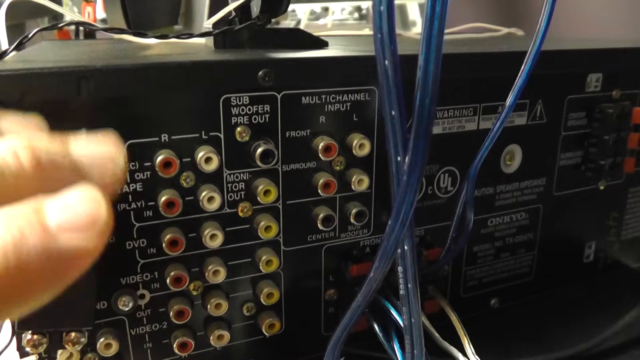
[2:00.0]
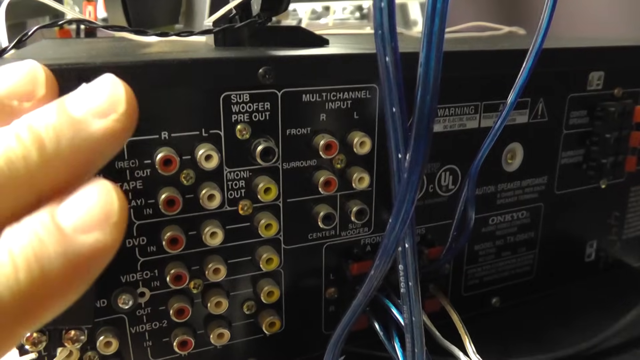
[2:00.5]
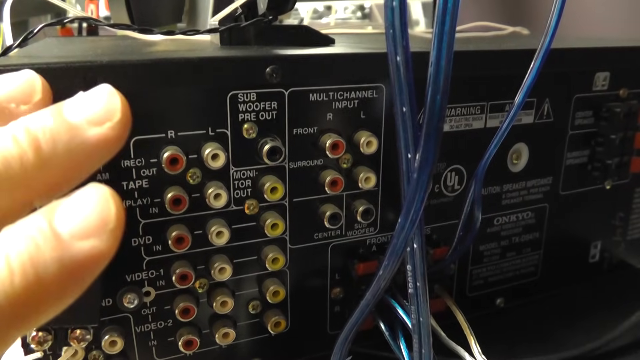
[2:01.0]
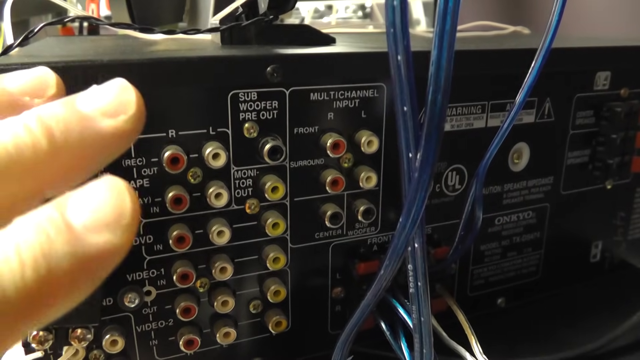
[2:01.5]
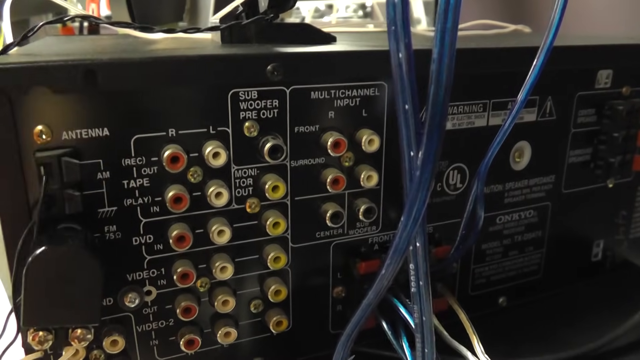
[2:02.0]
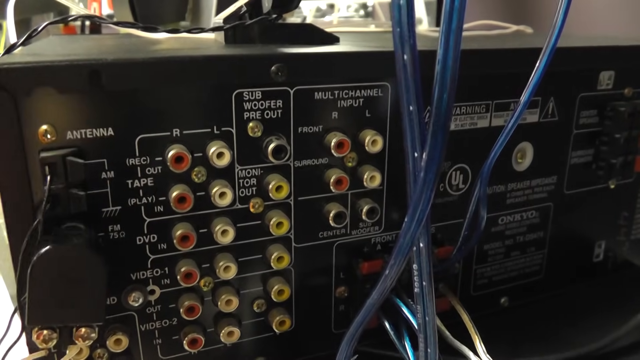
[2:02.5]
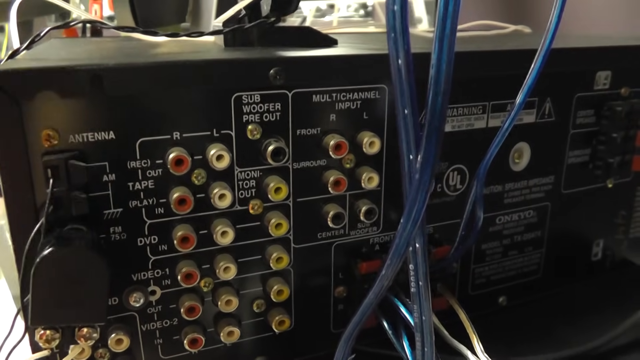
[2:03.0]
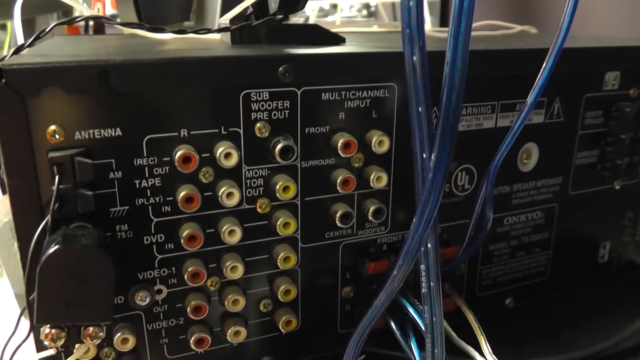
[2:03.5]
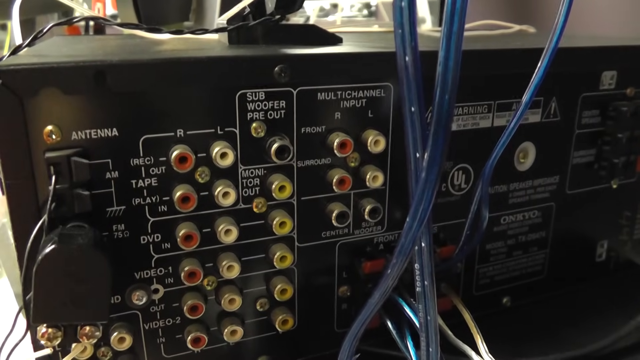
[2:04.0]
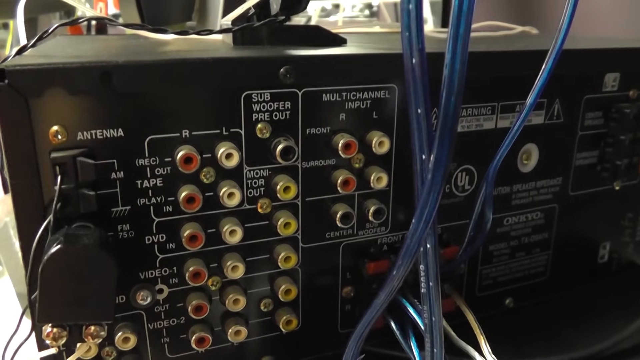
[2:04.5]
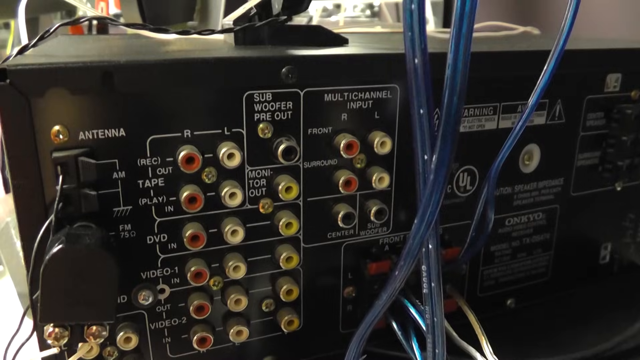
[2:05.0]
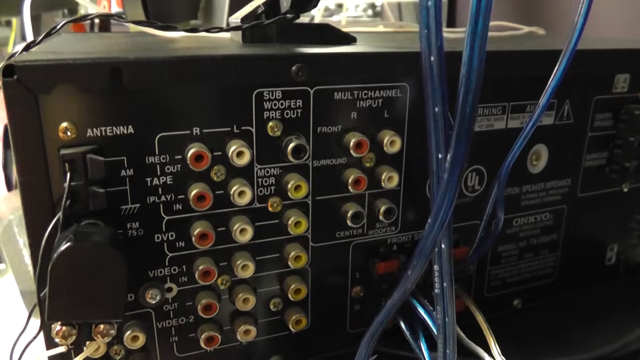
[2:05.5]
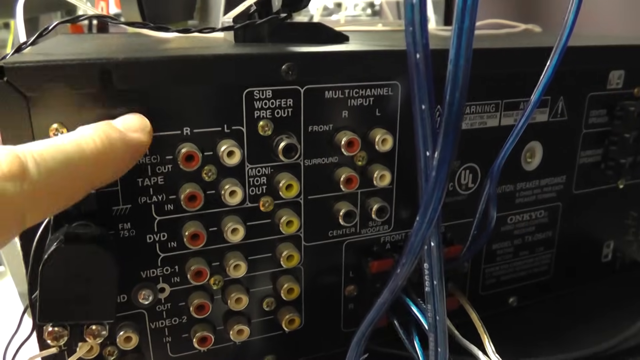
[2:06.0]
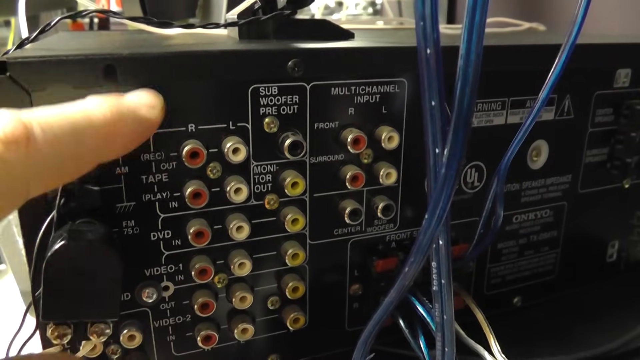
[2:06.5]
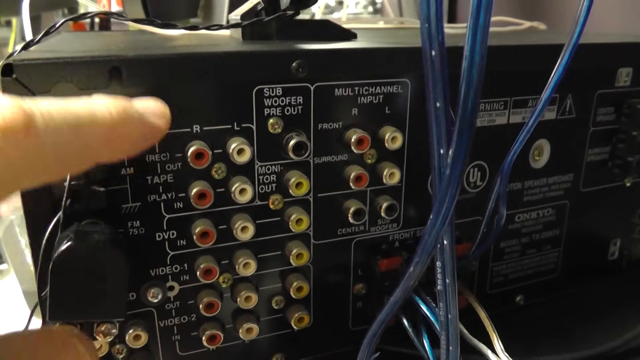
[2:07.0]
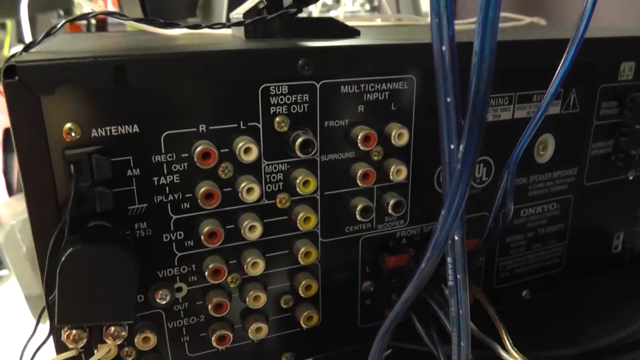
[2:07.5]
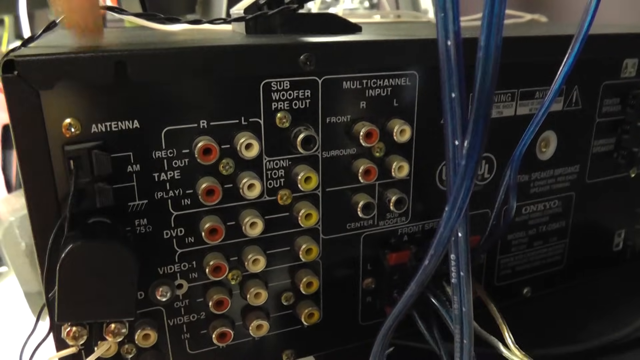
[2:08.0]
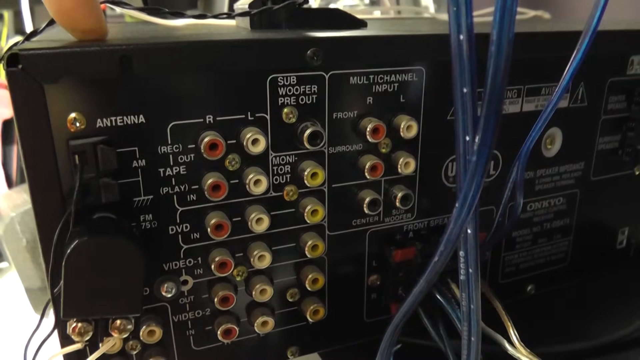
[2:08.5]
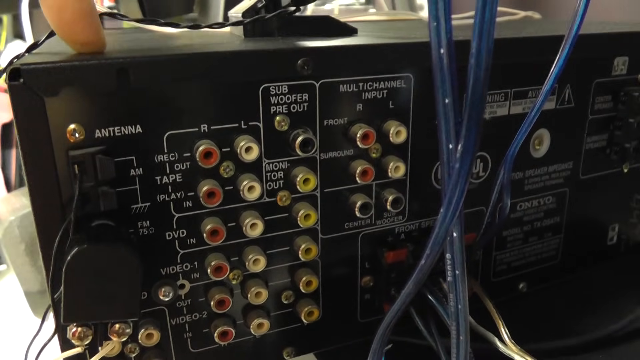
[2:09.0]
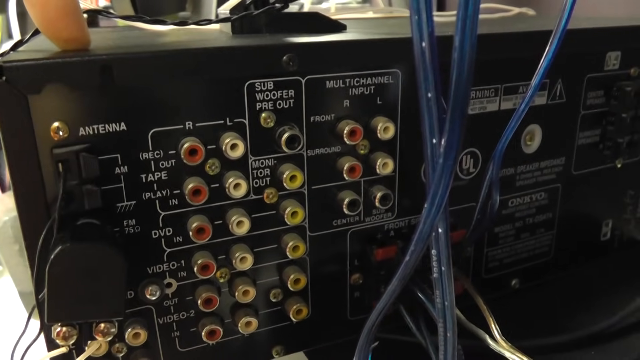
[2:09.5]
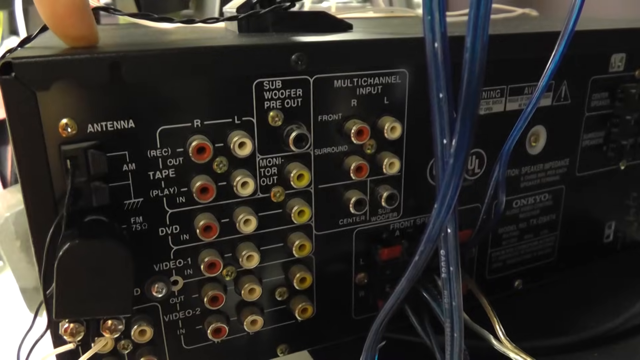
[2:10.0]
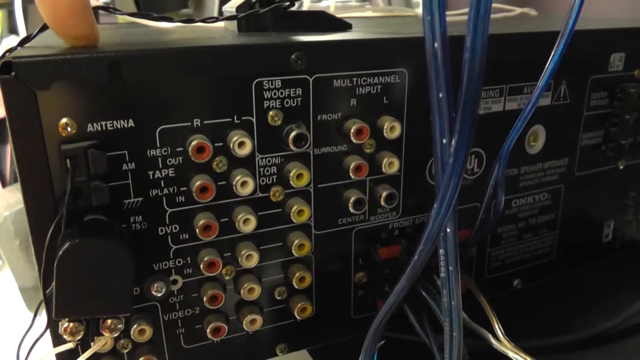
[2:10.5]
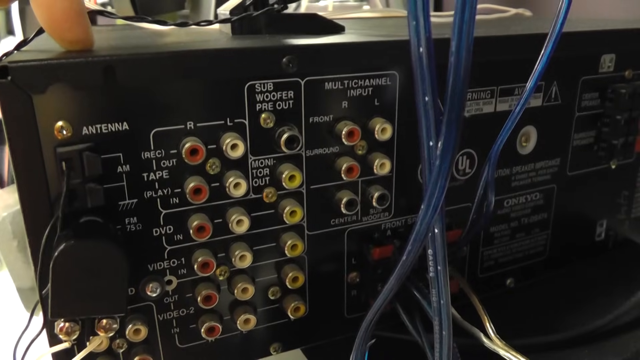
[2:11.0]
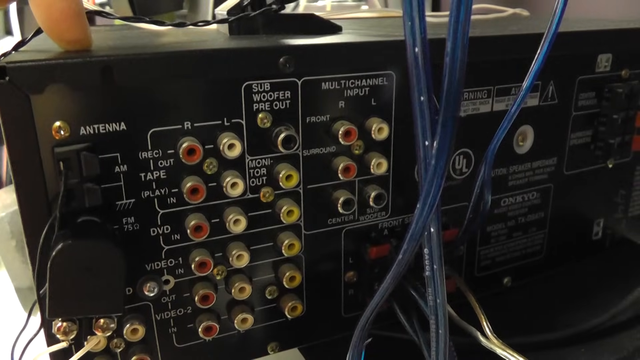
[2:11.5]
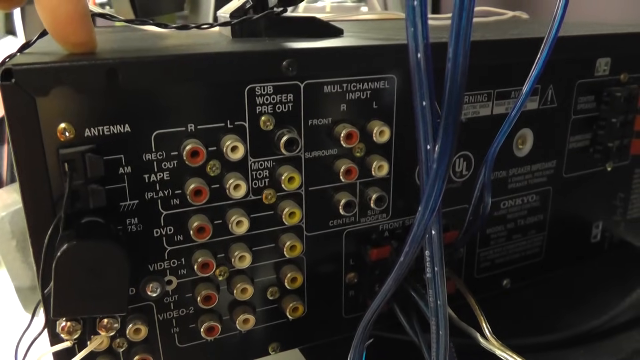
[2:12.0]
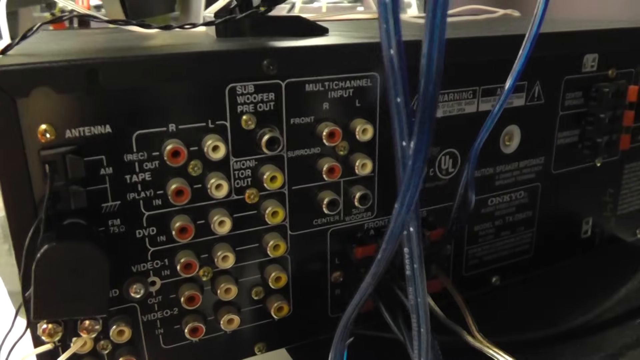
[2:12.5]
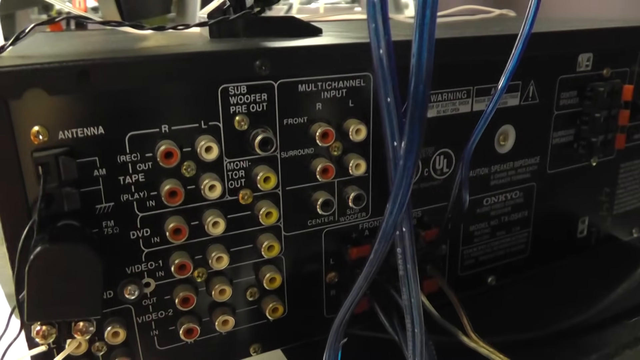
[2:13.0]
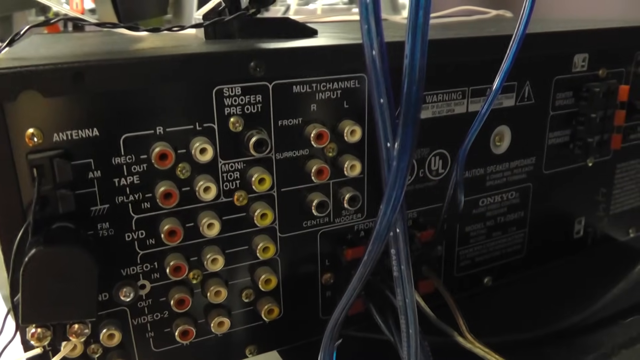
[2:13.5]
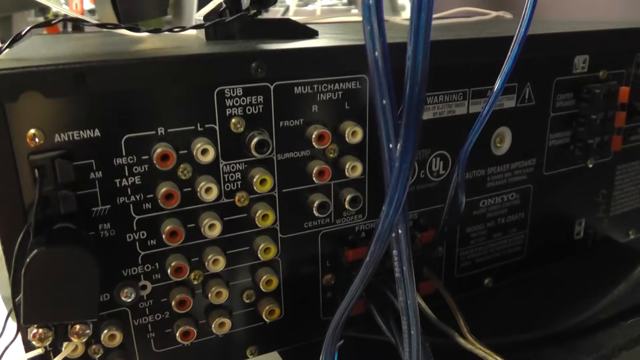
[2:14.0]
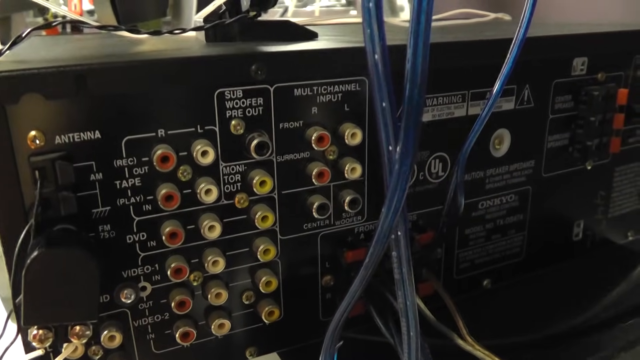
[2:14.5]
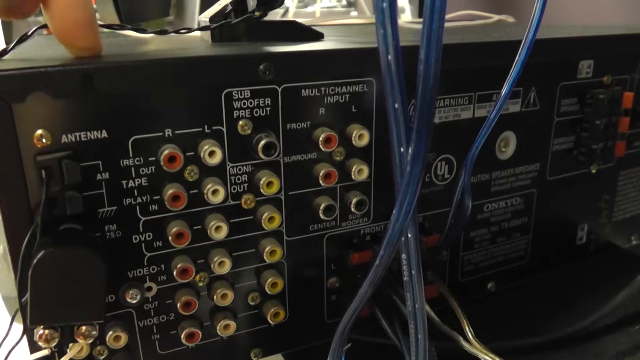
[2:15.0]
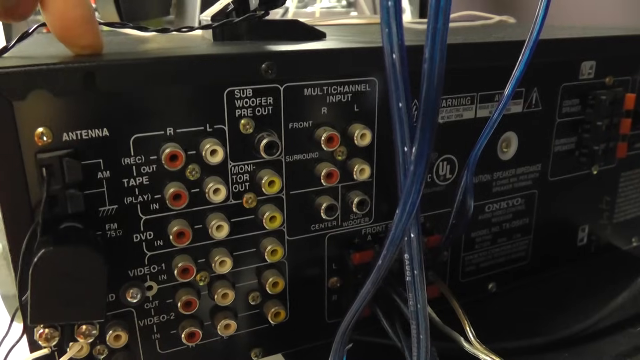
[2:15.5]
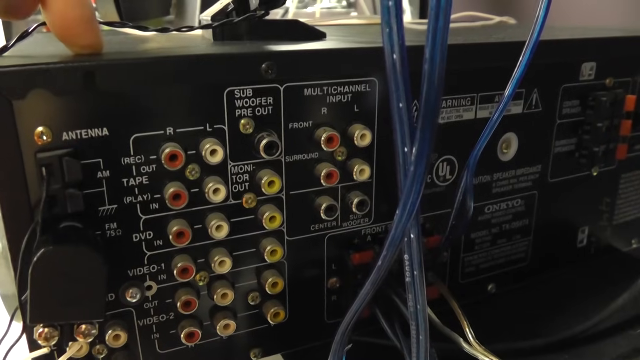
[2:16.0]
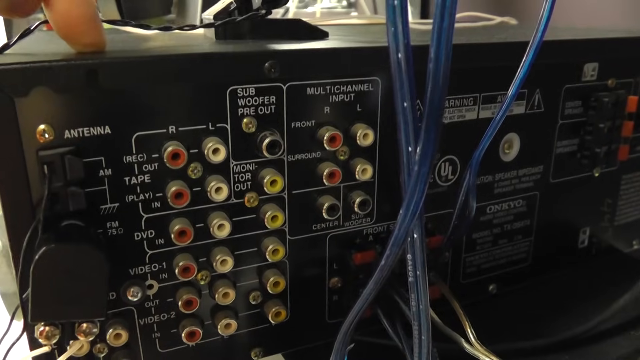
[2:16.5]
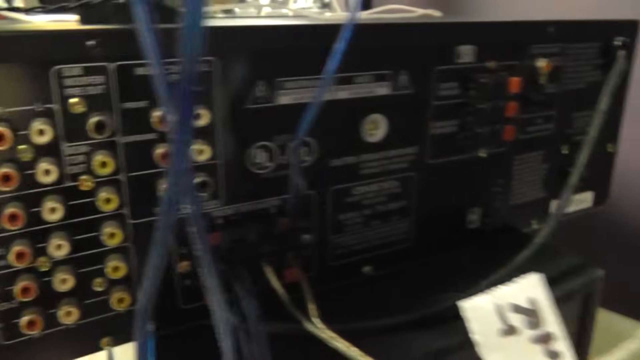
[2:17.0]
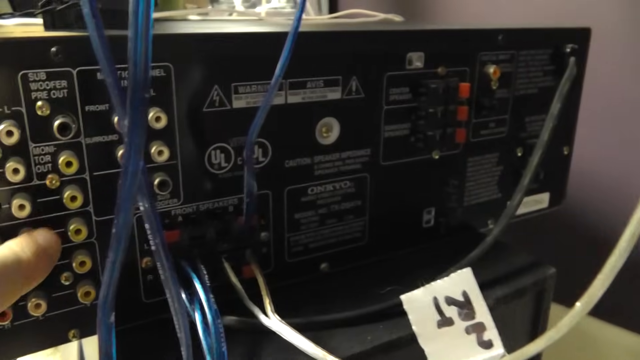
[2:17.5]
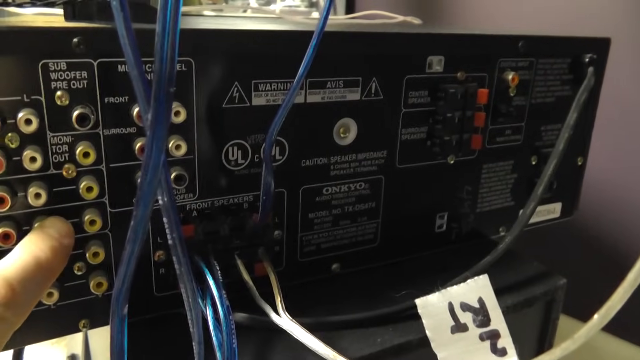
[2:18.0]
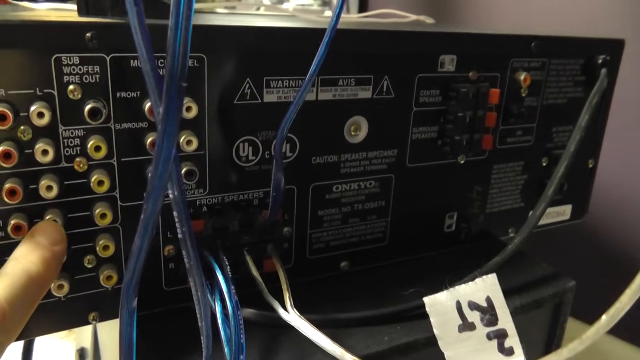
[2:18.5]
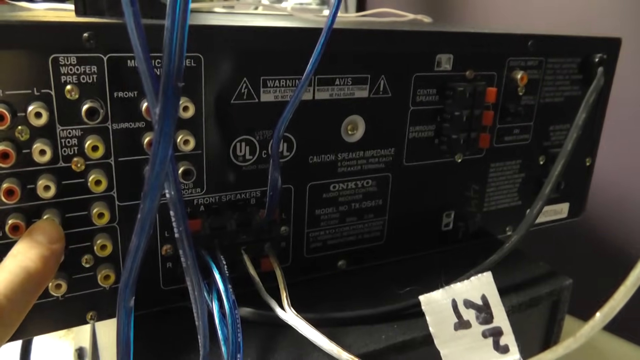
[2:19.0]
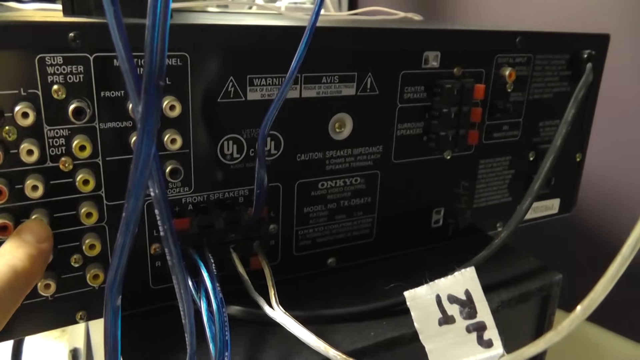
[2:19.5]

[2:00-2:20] The panel has little red plug-ins, four of them visible on the left side where the fingers are. In the middle it says "multi-channel input", with R and L, two red plug-ins on the left and two white plug-ins on the right, and unreadable writing beside them. Underneath are silver plug-ins in a smaller panel, half the size of the larger, elongated panel to its left, labeled "subwoofer pre-out". A screw looks like it screws into the panel, and diagonally to the right of it is a silver spot where an input can go. Below are four yellow input areas; to the left are five input areas, and to the left of those five more red inputs. Labels read "DVD" and "video one". Three fingers come in from the left side and go off the frame. More cords go around the top of the console, including a black and white cord on top.